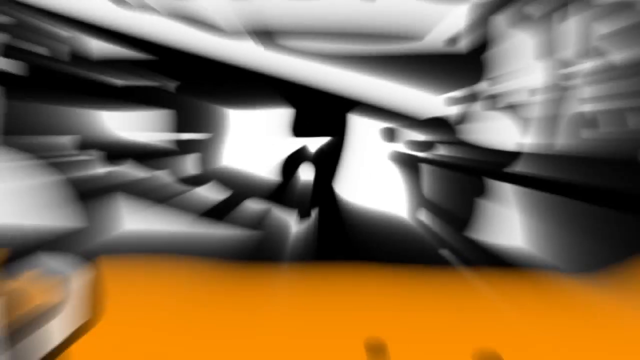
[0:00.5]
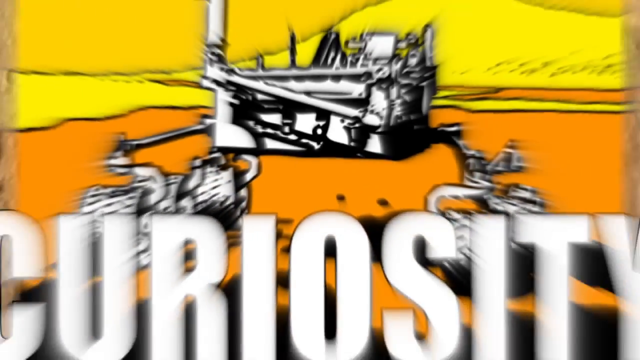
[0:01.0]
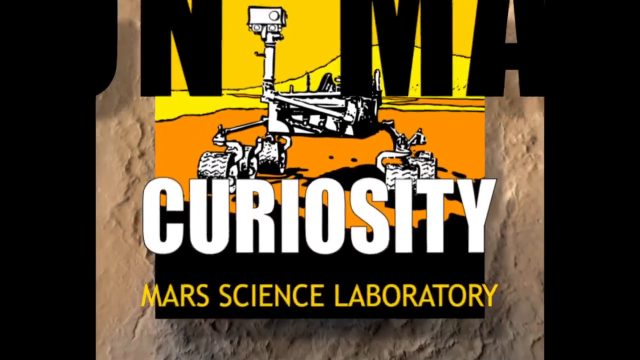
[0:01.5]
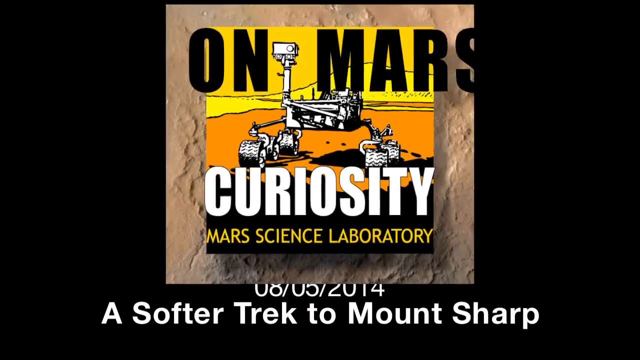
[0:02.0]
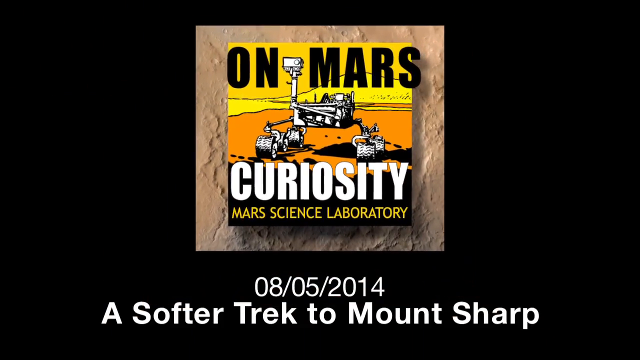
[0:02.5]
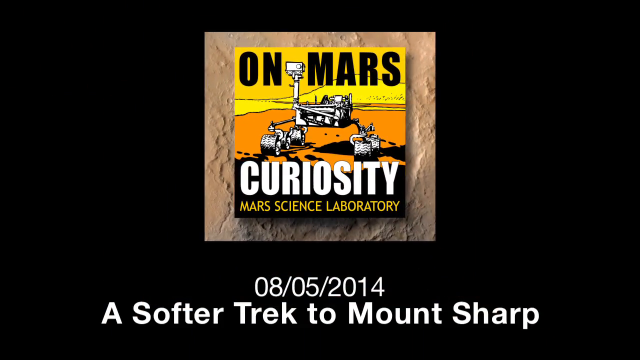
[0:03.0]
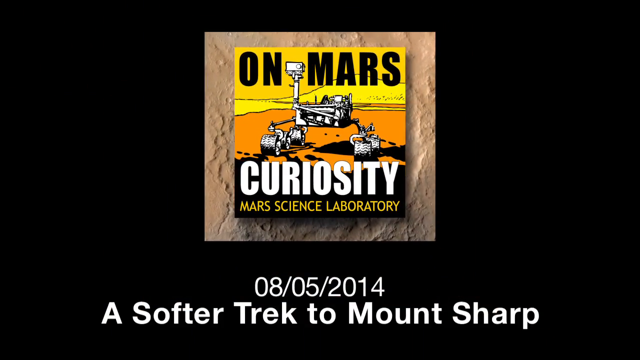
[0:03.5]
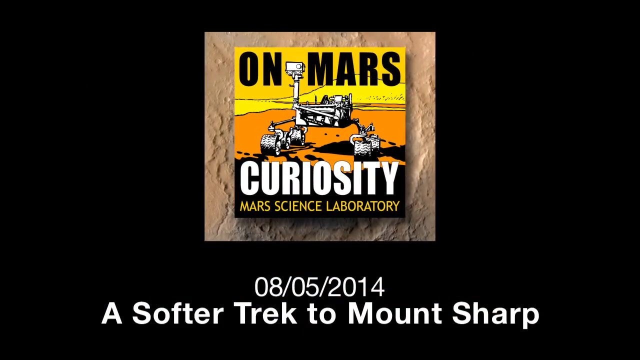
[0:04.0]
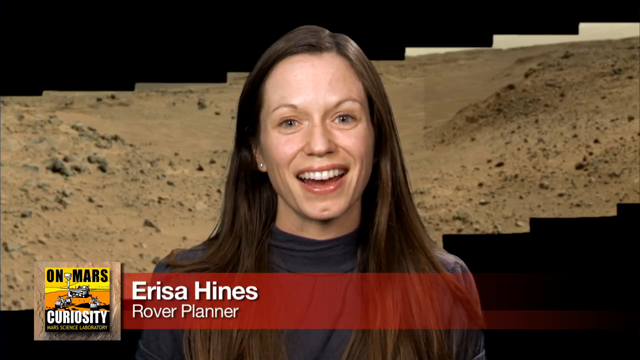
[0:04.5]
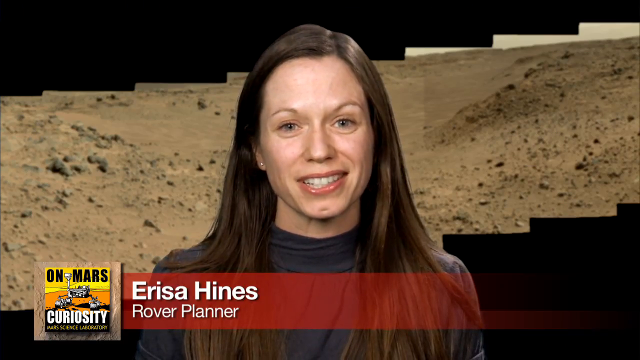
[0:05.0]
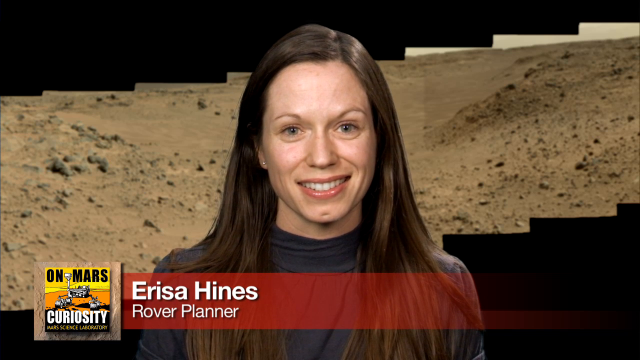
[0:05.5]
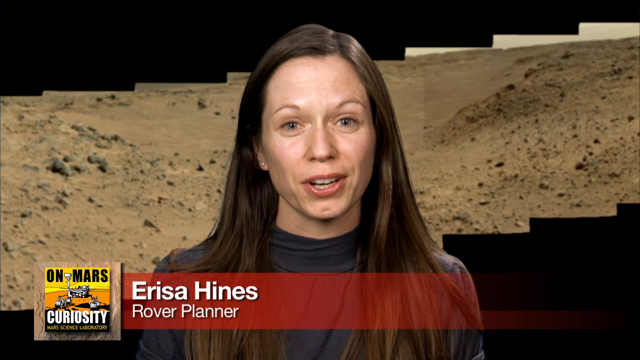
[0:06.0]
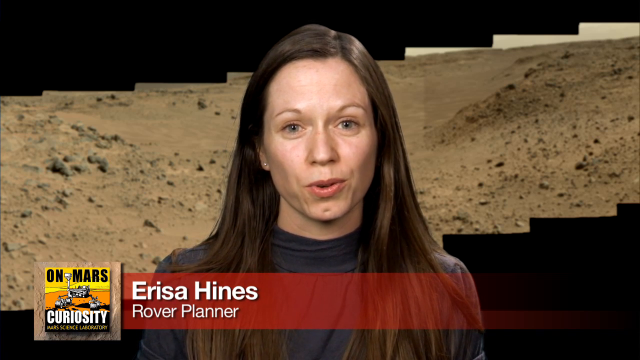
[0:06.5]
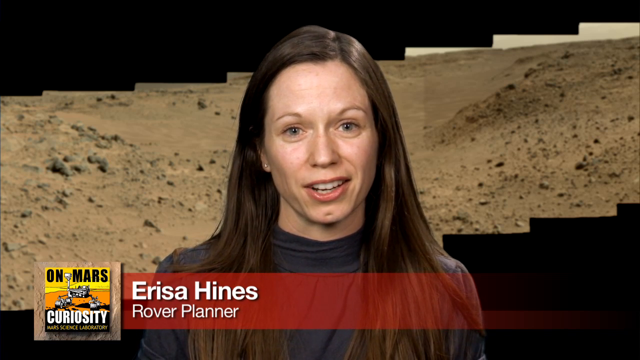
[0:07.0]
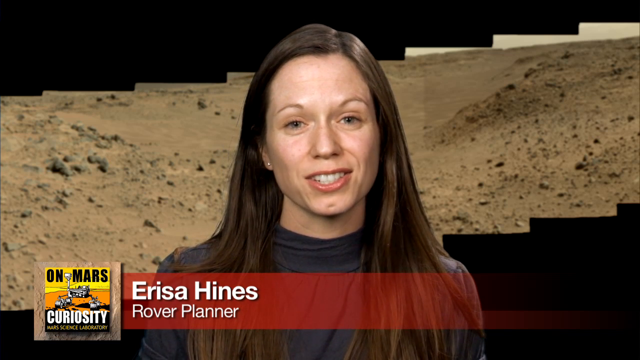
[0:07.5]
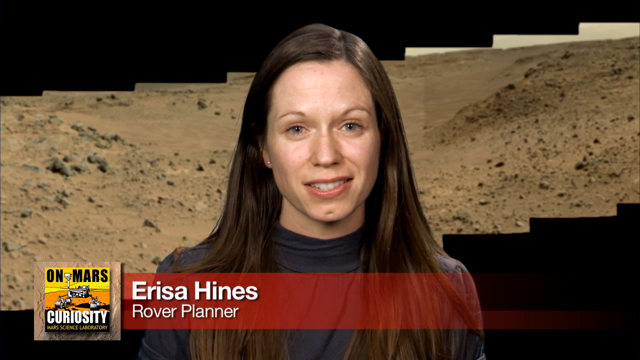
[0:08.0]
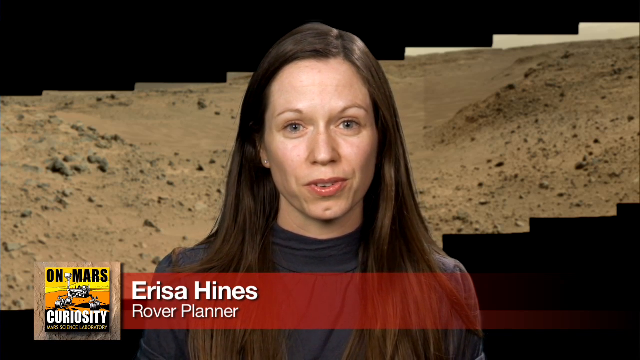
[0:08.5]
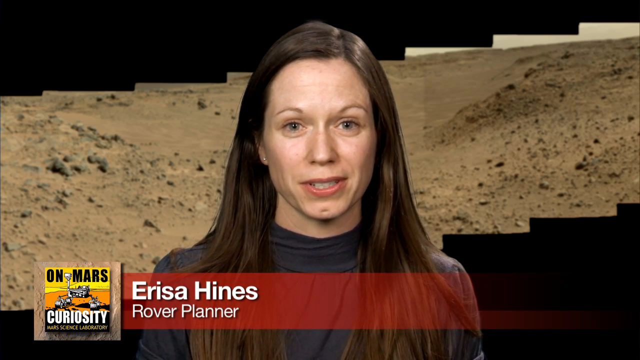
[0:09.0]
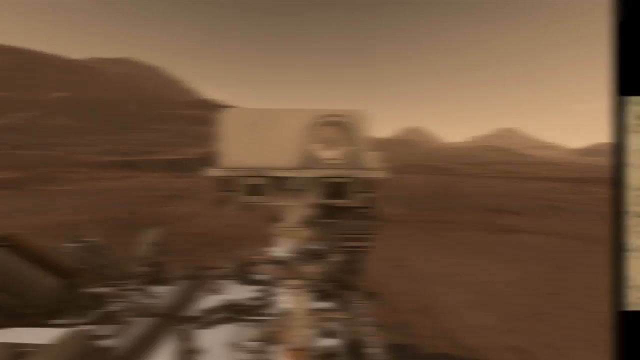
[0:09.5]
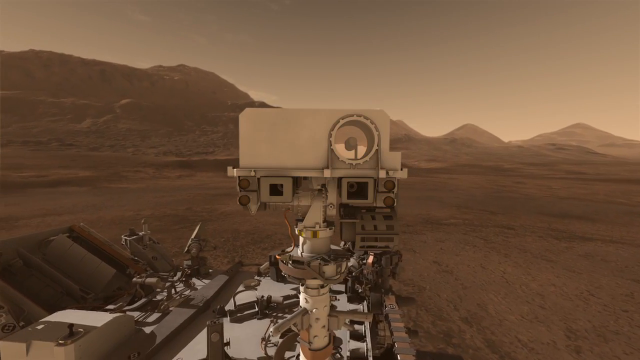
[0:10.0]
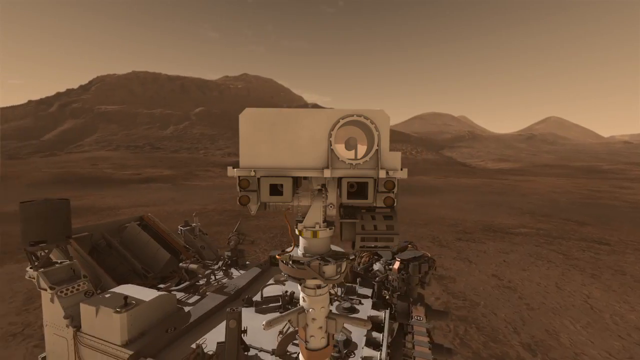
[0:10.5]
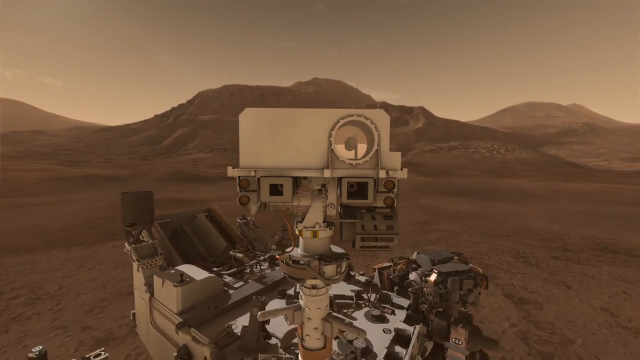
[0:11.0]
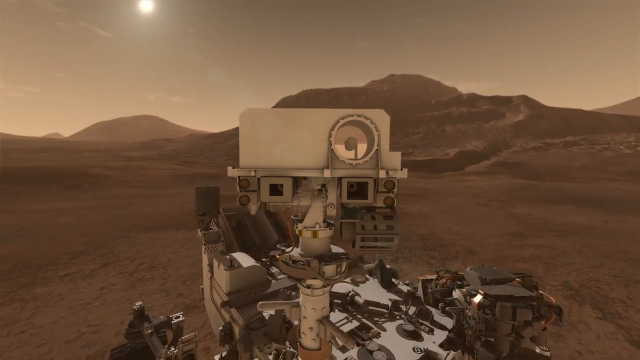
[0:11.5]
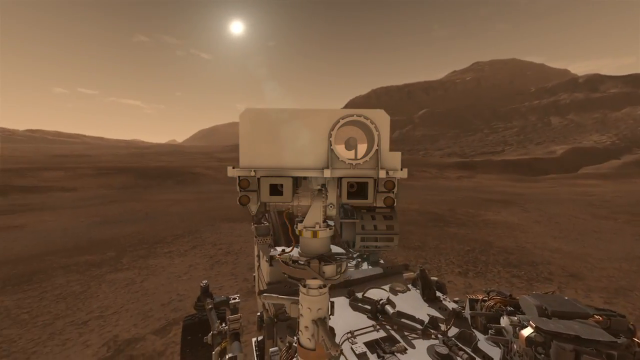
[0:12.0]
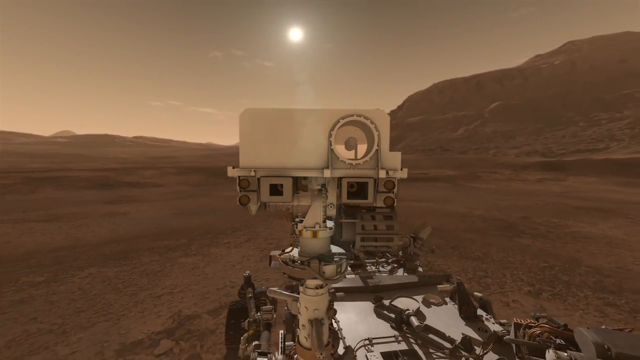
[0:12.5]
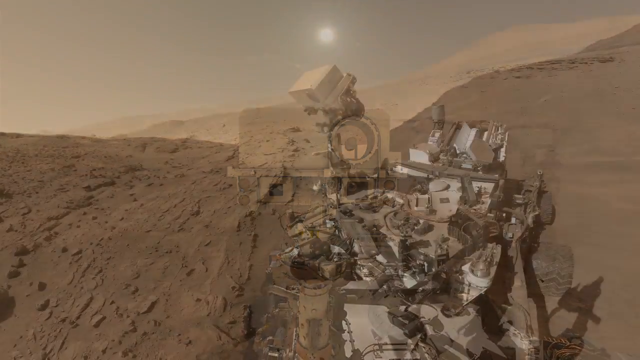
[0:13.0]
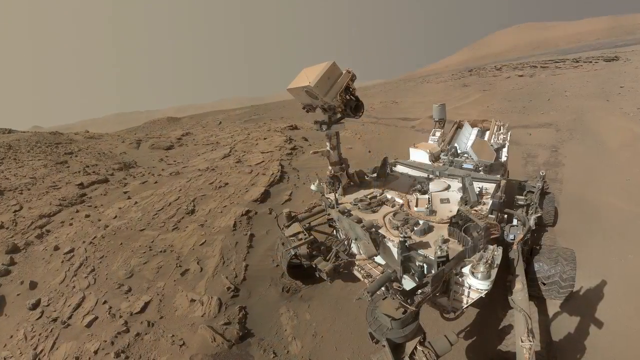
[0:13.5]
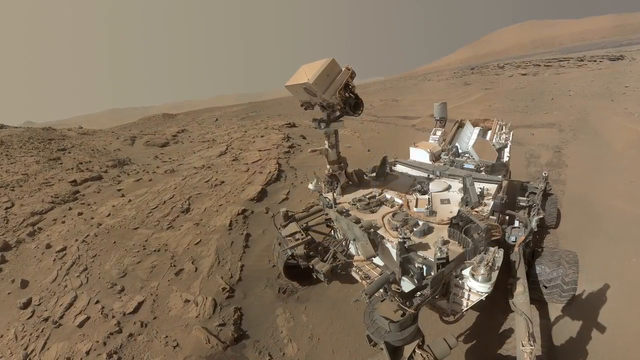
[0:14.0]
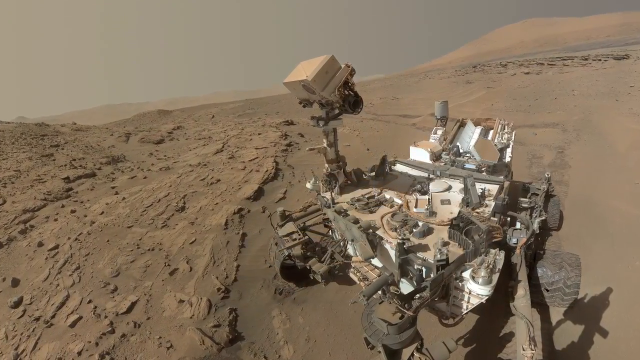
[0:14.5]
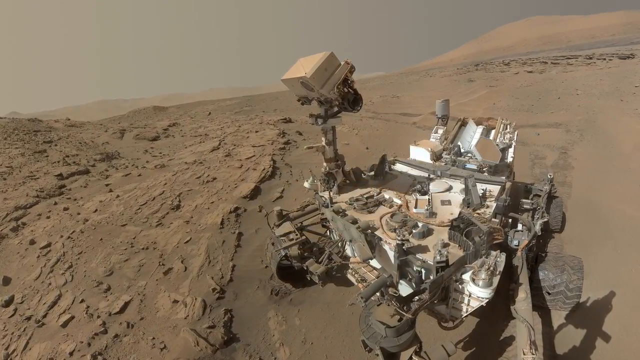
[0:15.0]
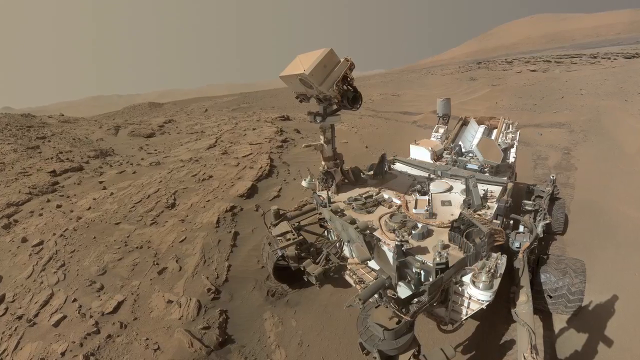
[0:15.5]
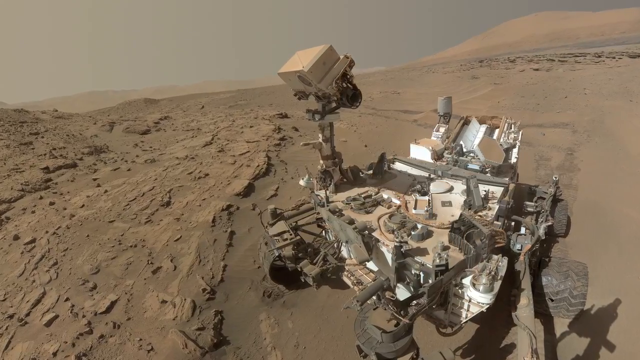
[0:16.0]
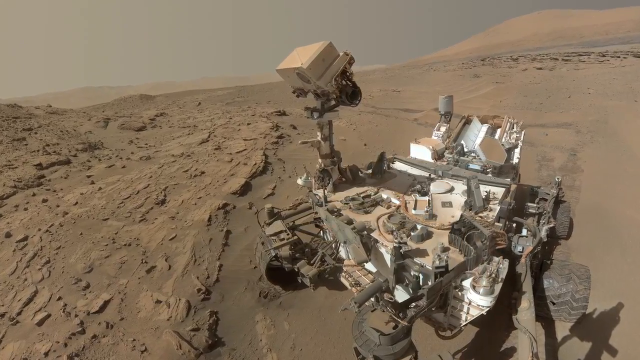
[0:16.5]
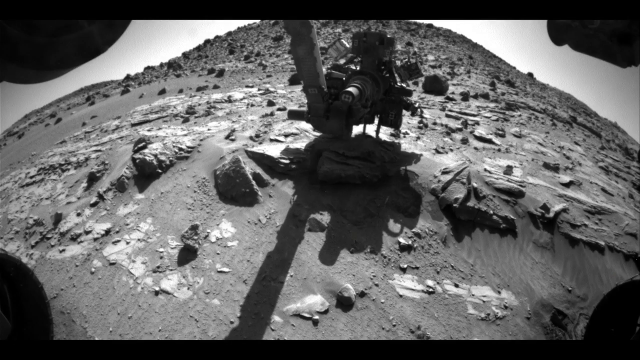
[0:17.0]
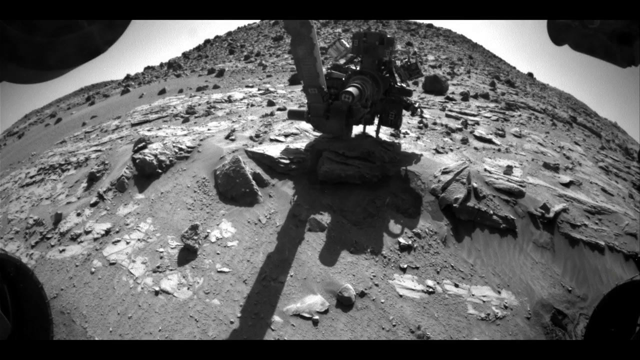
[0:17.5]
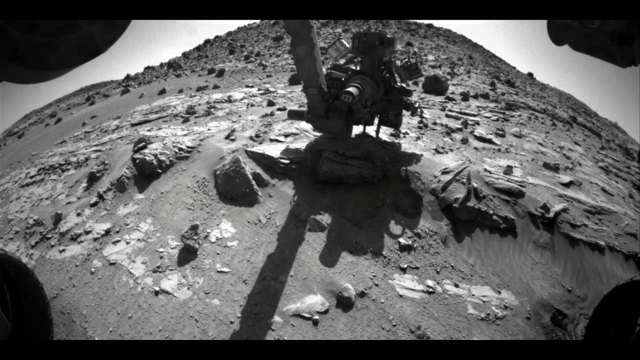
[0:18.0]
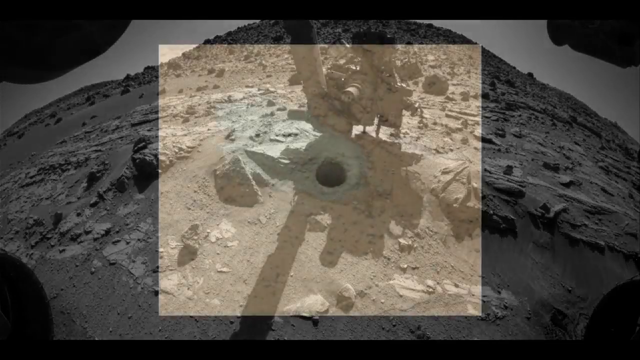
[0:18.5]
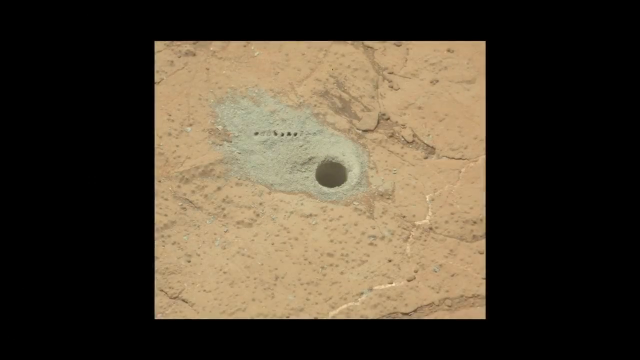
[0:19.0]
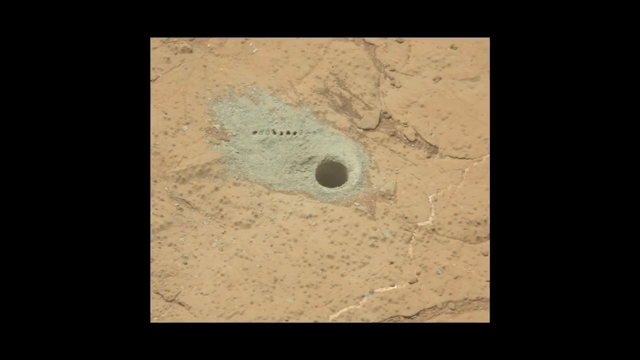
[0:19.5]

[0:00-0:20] The video opens with the channel's logo and an explanation of what the video is about: a Mars rover, a robot that explores the planet. A woman appears, shot reporter style, with a title card showing her name, Erica. The first shot is a close-up view of the rover itself in color. It then moves to a black-and-white shot of the rover, apparently from the past, which pulls out to give perspective on where the rover is. The shots are very crisp and clear. The video then cuts to what looks like a map, a cross-section of where the rover is.